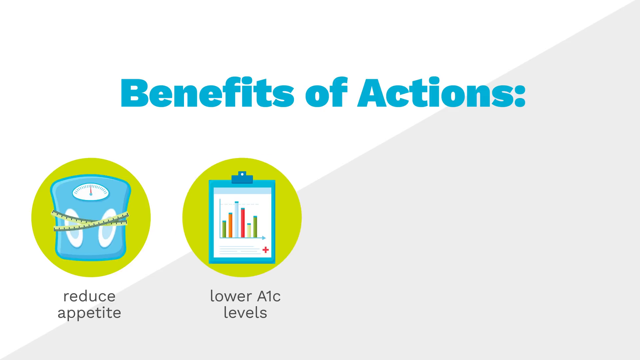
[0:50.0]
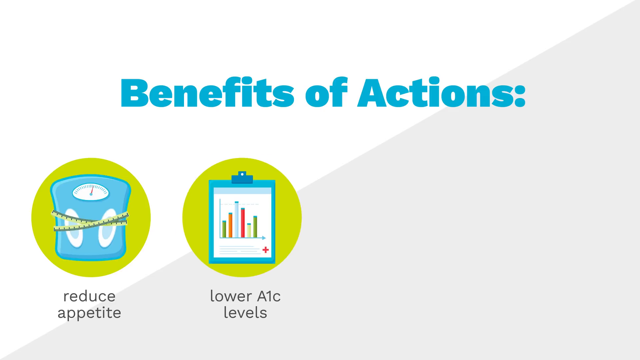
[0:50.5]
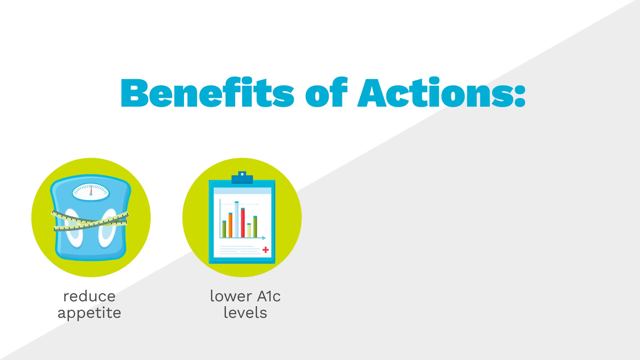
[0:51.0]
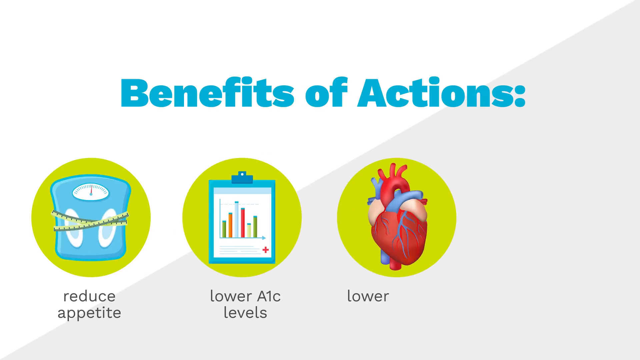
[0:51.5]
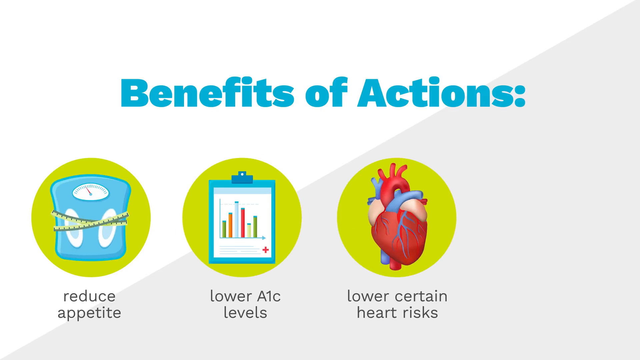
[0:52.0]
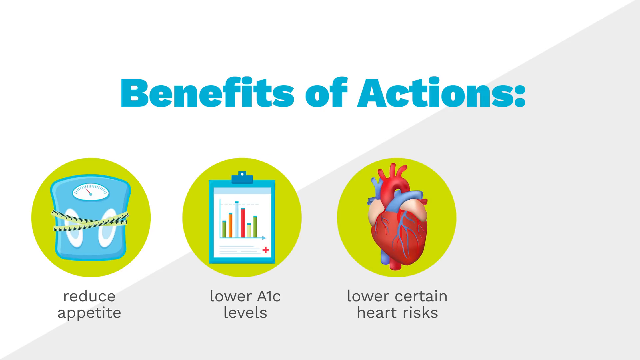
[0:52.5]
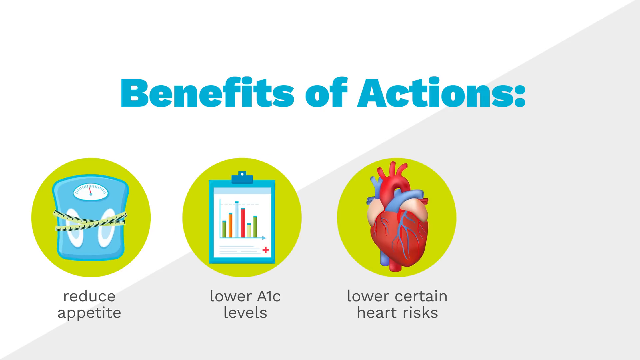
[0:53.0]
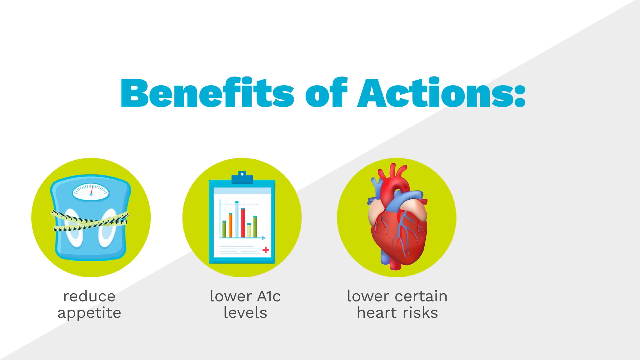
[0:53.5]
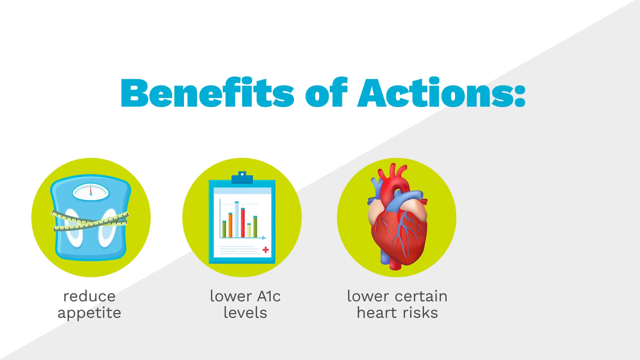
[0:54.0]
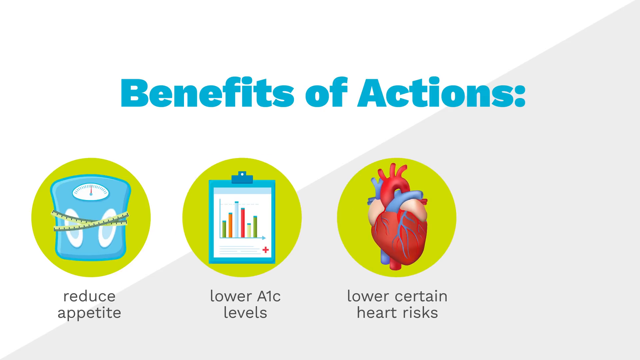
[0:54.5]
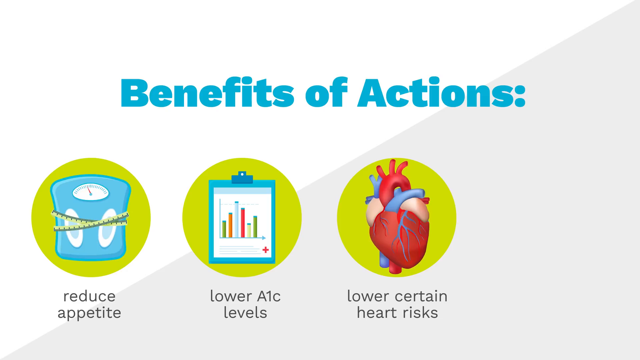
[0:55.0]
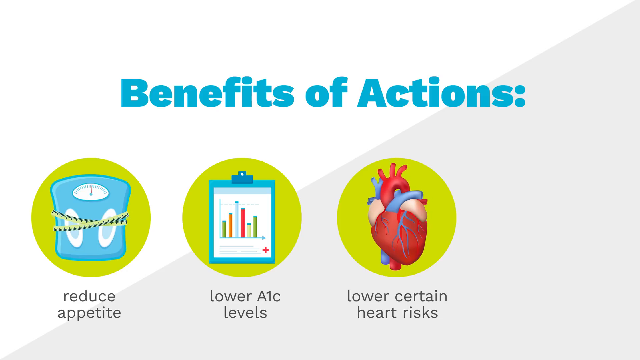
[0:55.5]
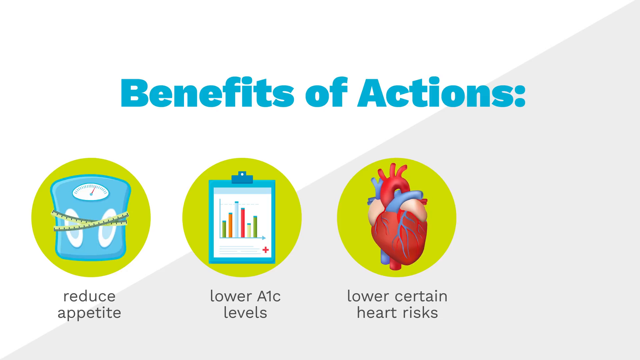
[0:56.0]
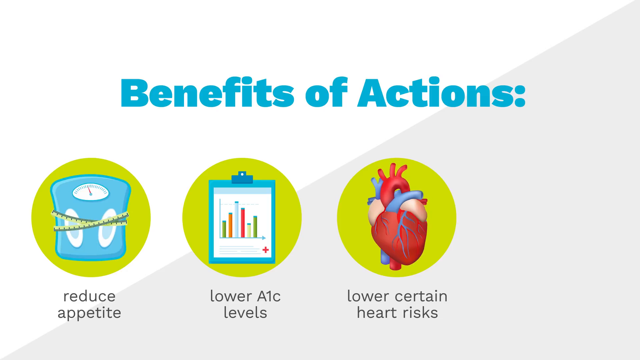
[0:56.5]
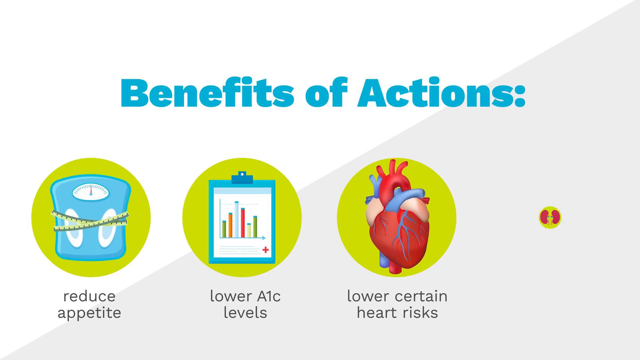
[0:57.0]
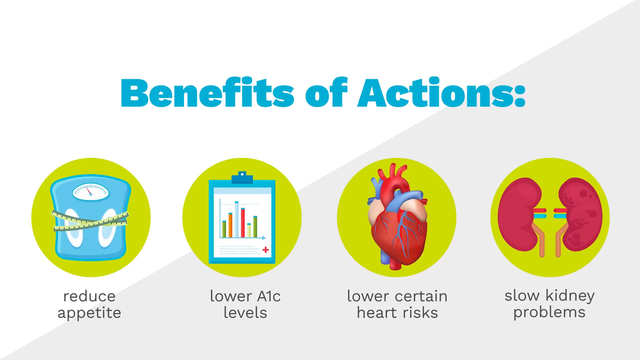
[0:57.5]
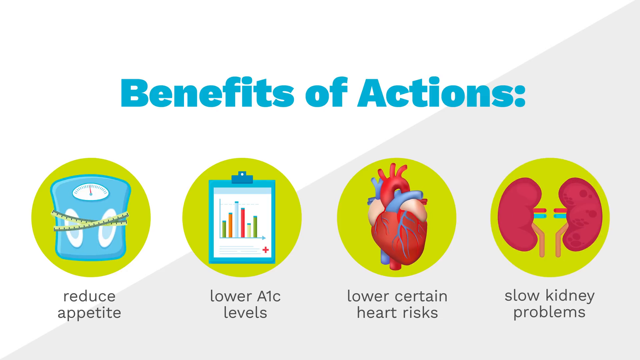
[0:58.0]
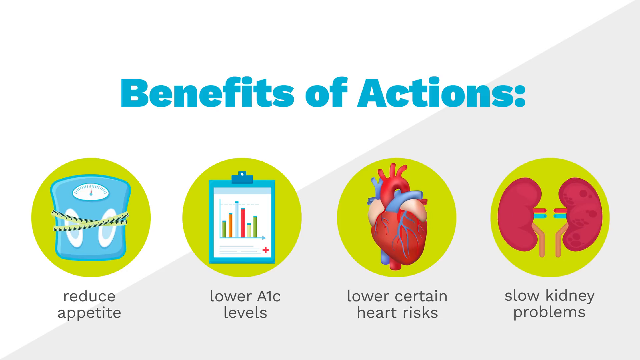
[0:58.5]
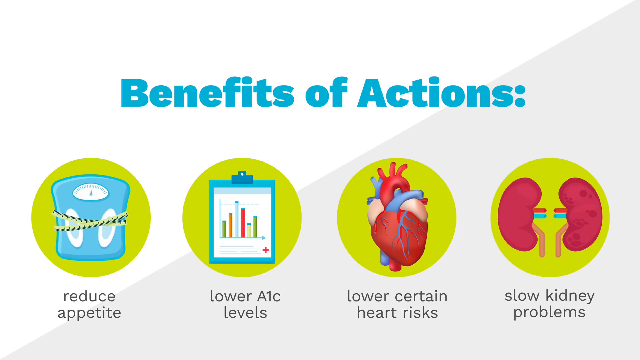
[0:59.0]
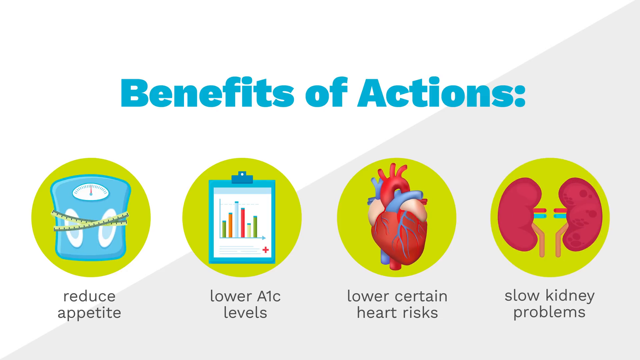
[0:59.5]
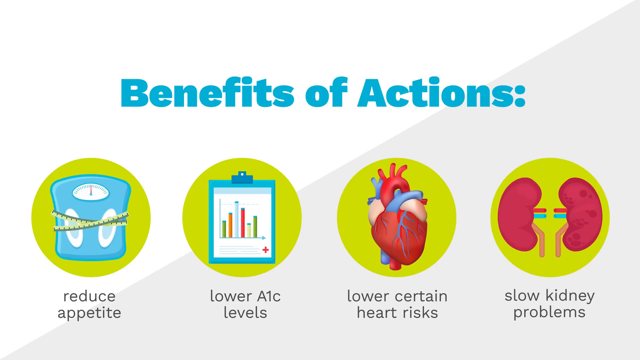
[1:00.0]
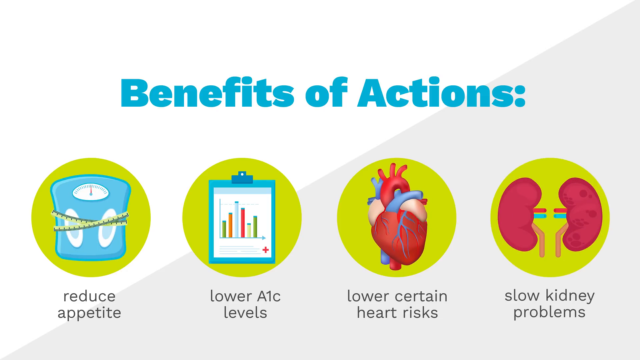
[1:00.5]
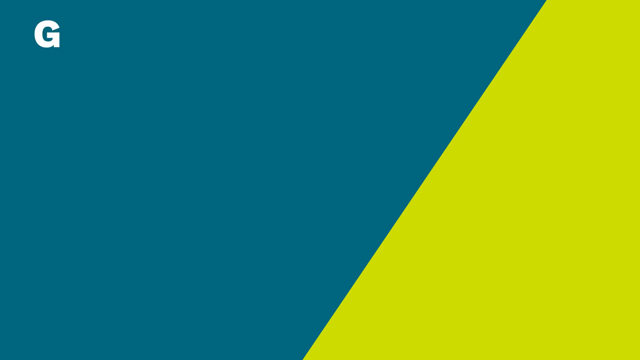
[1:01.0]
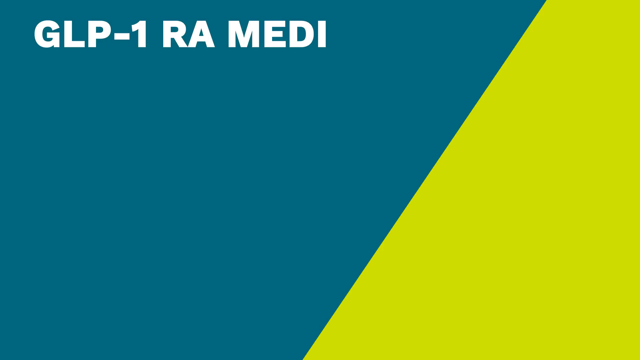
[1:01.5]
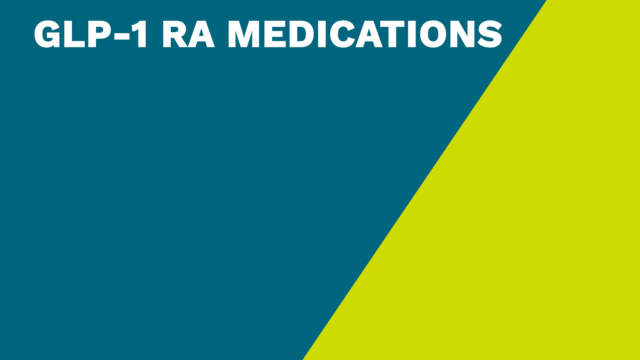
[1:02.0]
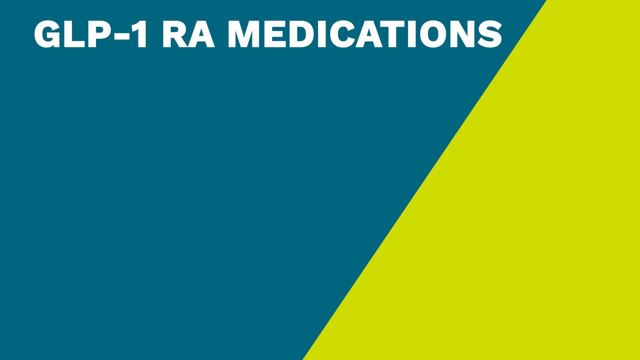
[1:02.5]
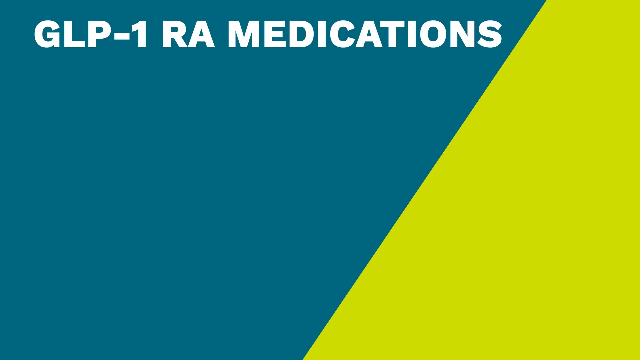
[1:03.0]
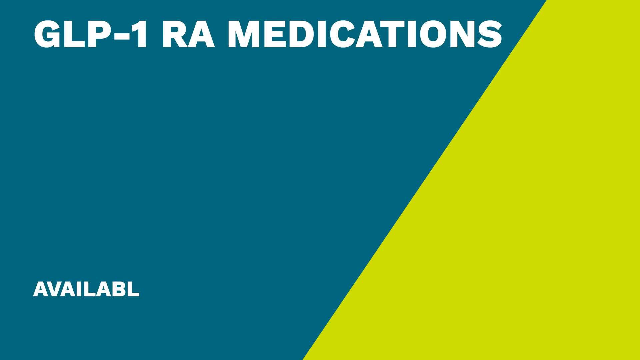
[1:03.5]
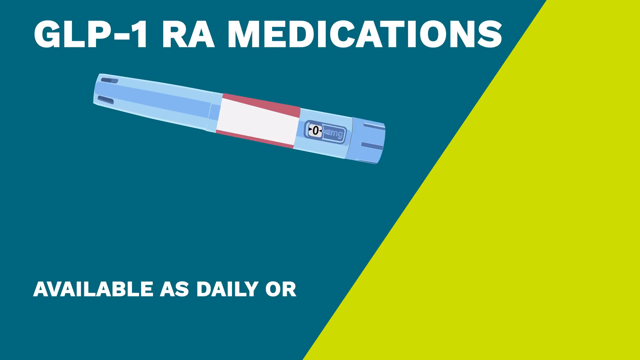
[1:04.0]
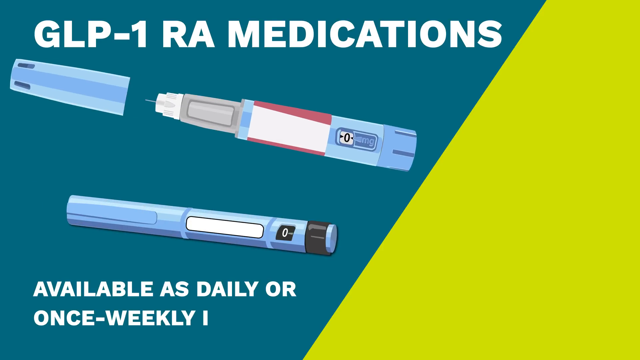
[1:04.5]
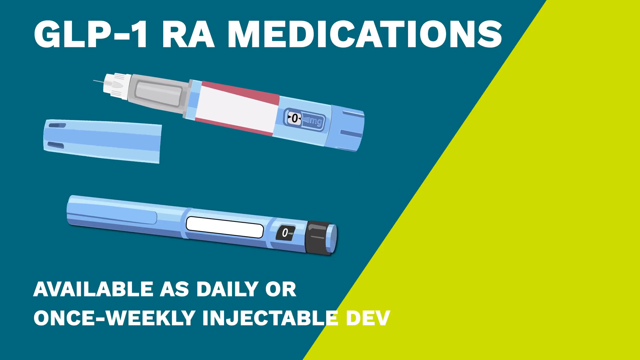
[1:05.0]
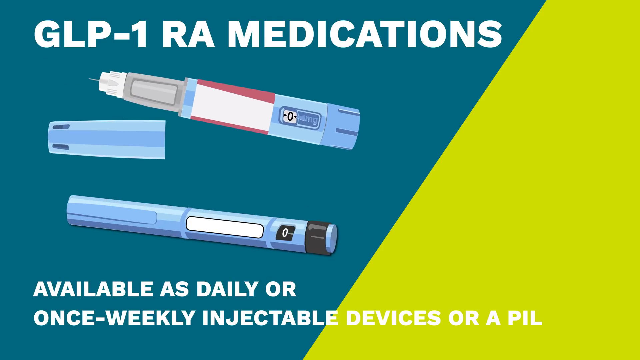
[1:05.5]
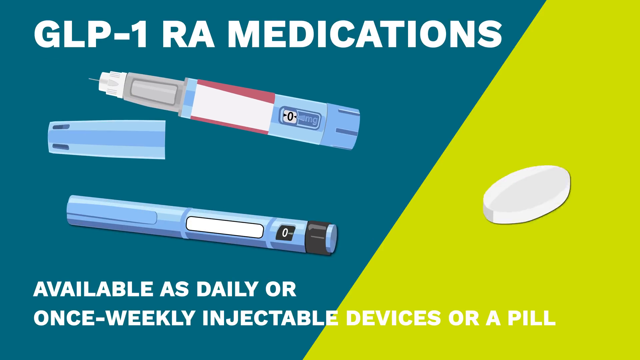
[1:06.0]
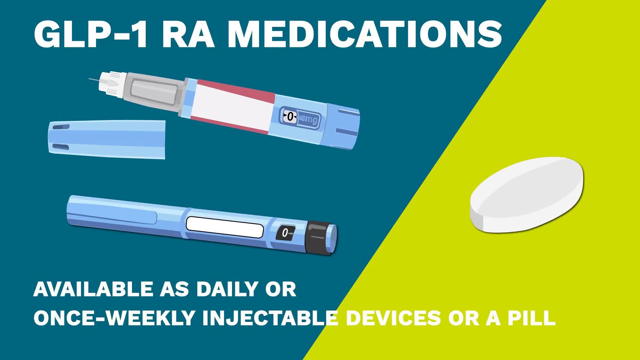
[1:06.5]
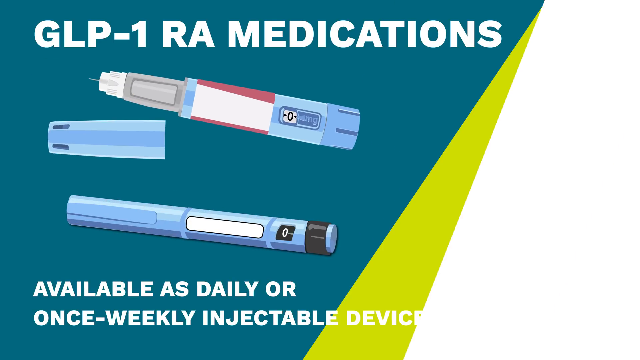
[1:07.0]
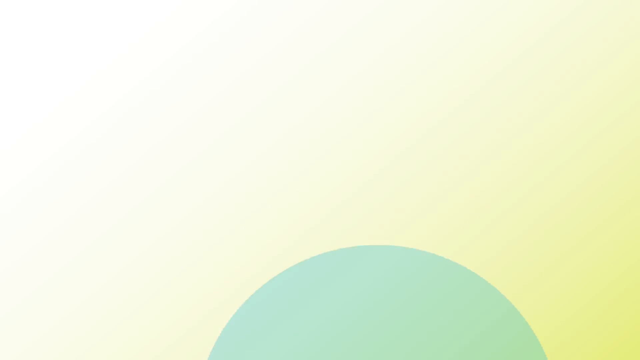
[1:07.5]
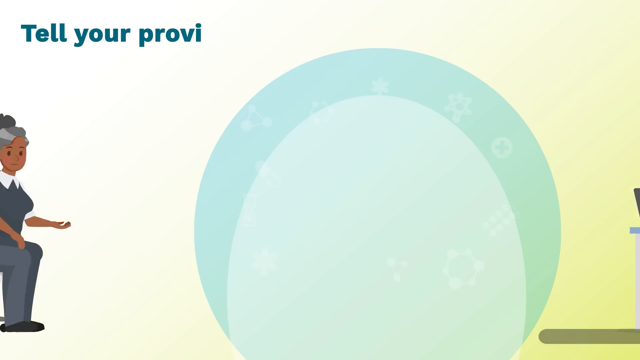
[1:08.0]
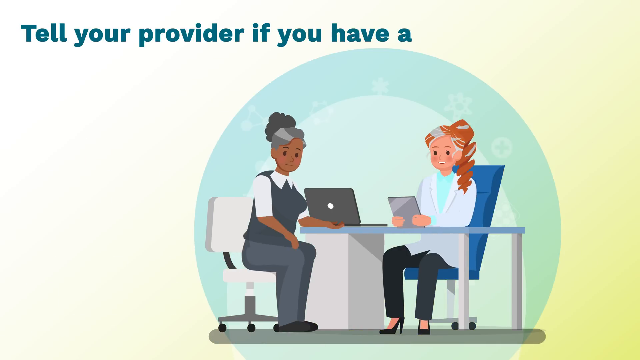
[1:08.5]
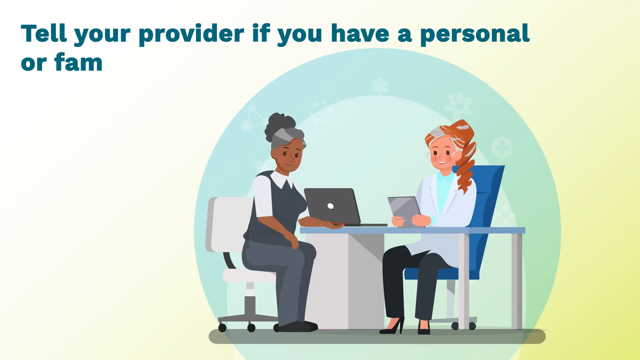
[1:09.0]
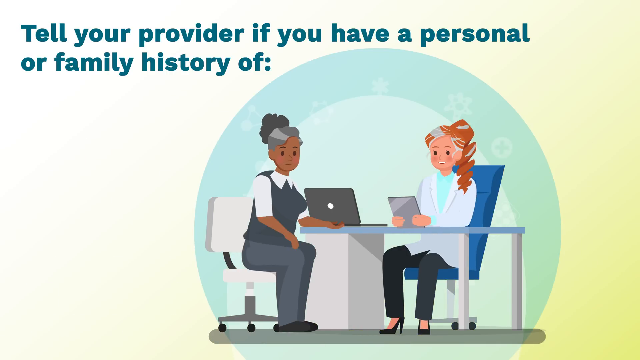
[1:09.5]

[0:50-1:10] A slide titled "benefits of actions" in teal lettering lists reduced appetite, lower A1c, lower certain heart risks, and slow kidney problems. The background is again diagonal, white in the upper left and gray in the lower right, fading to a black bar at the bottom. Each item sits on a green or yellowish-green circle: reduced appetite shows a scale with a tape measure wrapped around it, lower A1c shows a clipboard, lower certain heart risks shows a red heart, and slow kidney problems shows a red schematic of a kidney. The next slide shows that GLP-1 RA medications are available as a daily or once-a-week injectable, on the left-hand side, or as a once-a-week pill, on the right-hand side. The injectables look like standard hospital syringes and the pill looks like a standard pill.